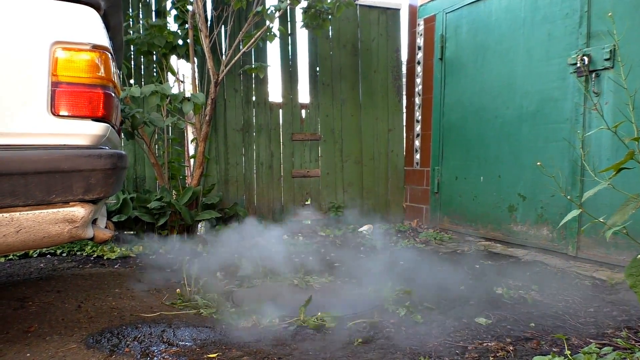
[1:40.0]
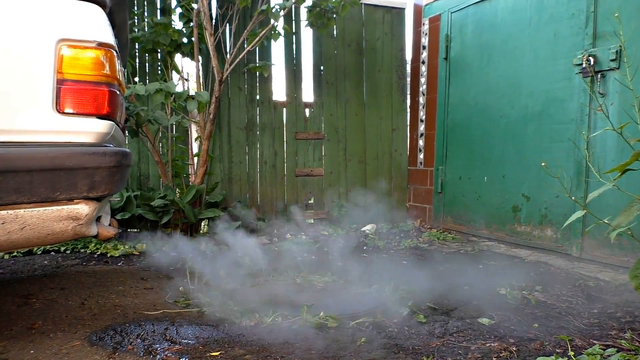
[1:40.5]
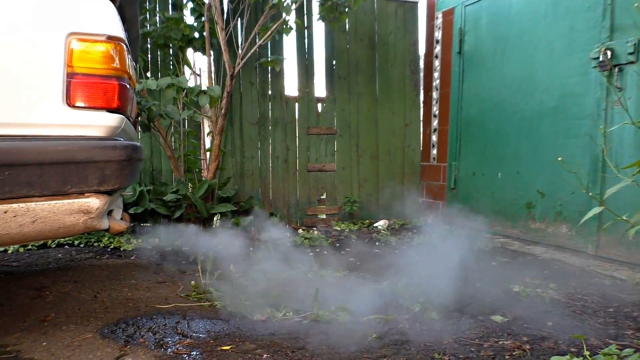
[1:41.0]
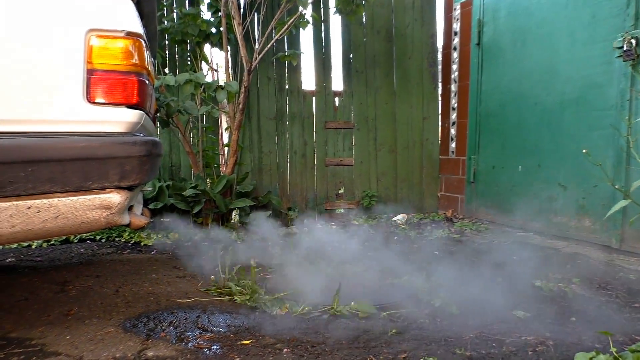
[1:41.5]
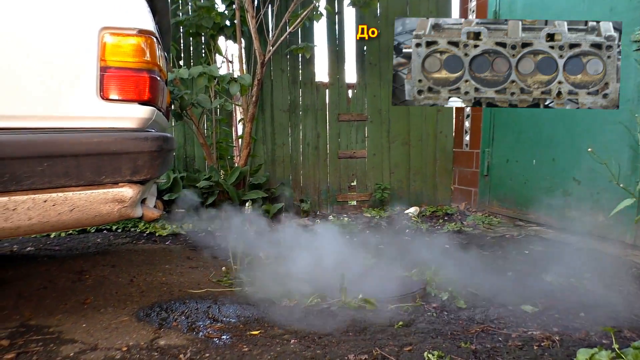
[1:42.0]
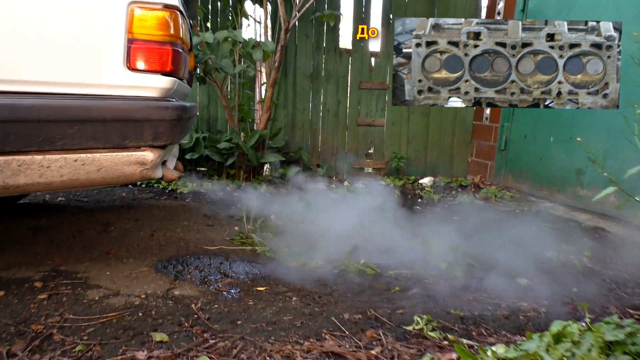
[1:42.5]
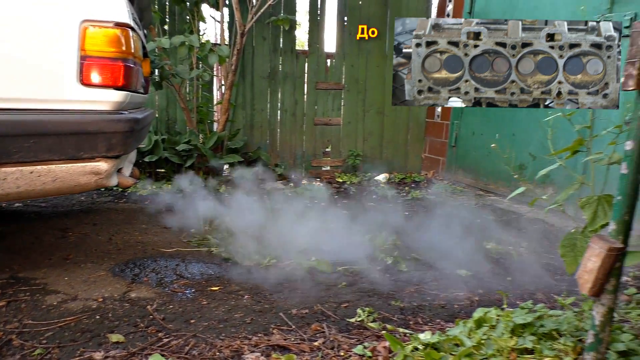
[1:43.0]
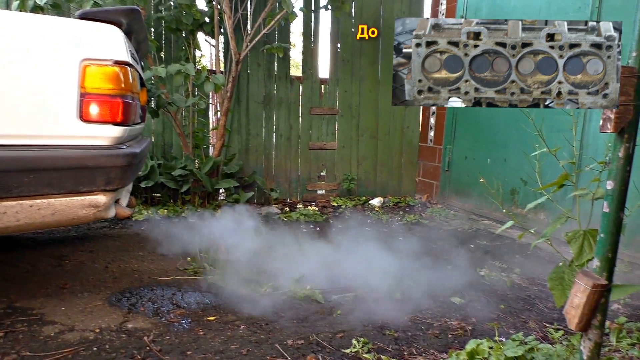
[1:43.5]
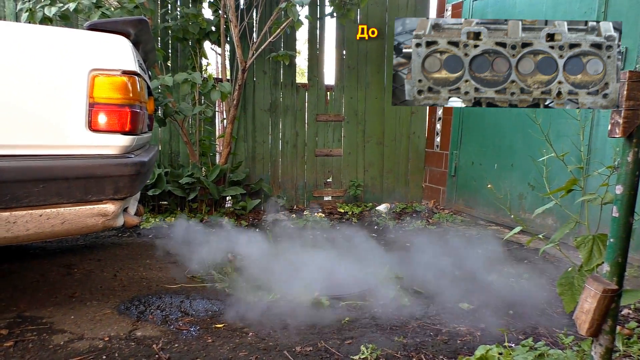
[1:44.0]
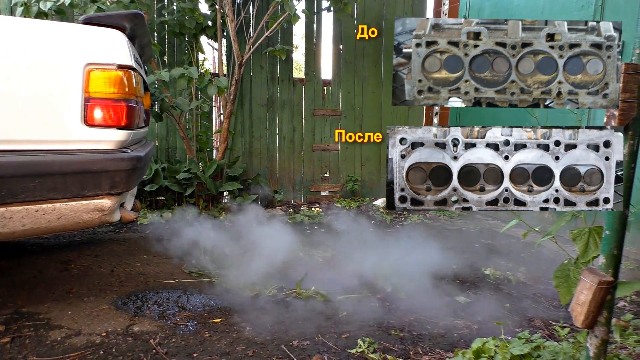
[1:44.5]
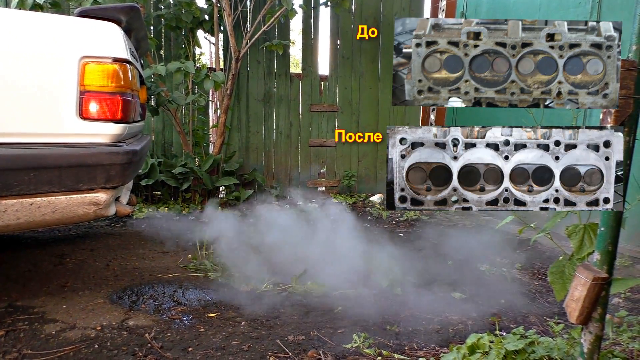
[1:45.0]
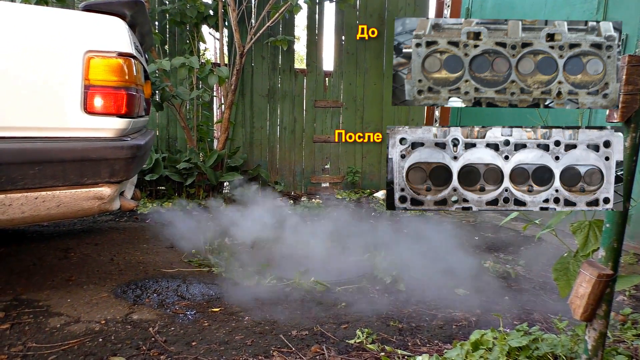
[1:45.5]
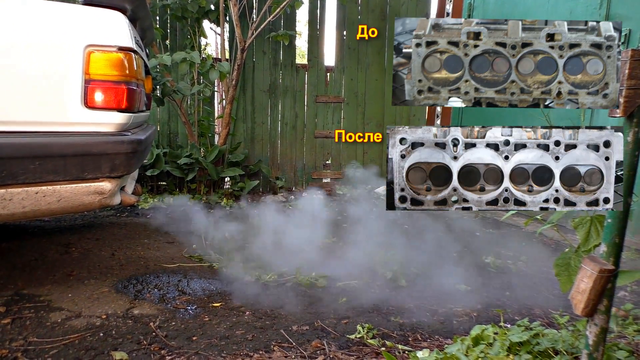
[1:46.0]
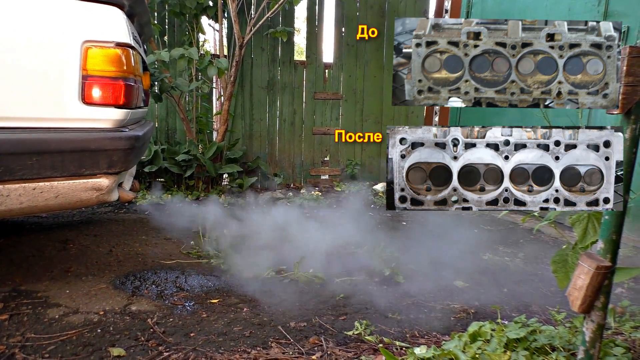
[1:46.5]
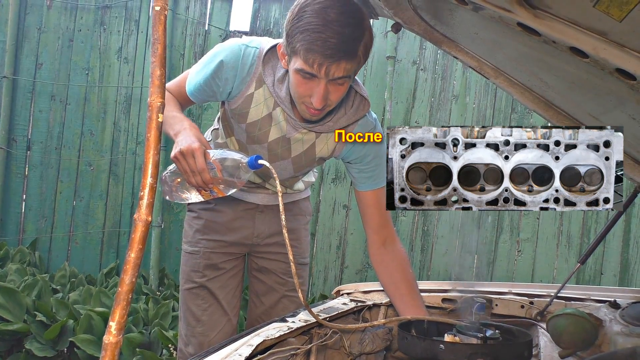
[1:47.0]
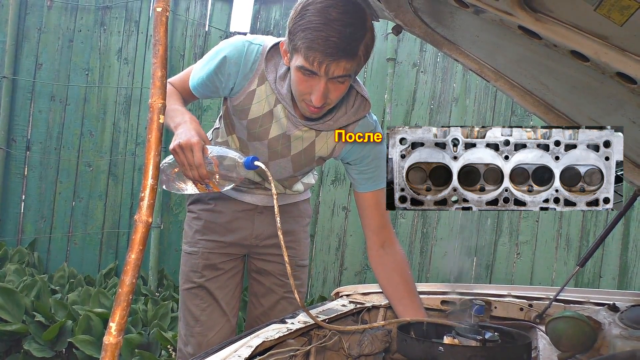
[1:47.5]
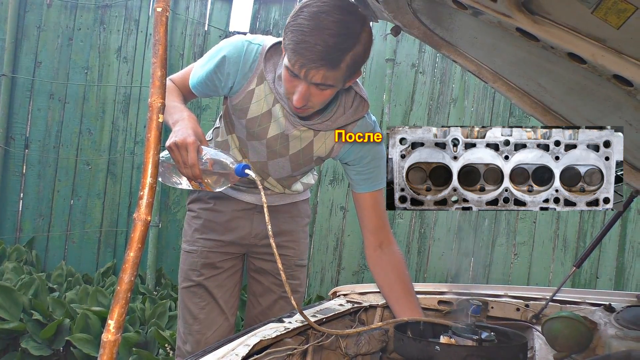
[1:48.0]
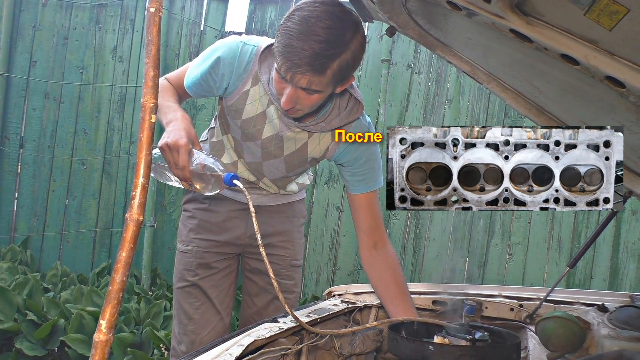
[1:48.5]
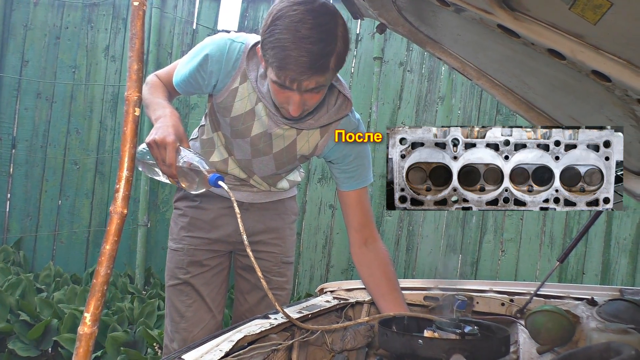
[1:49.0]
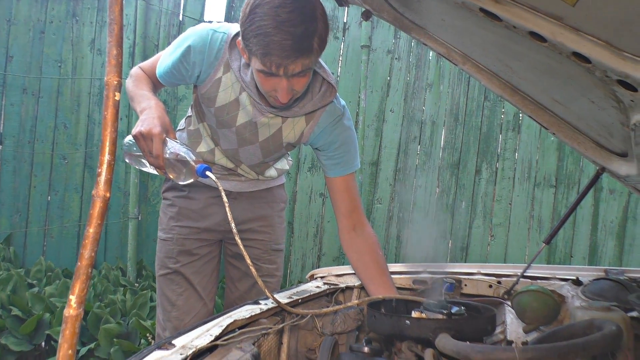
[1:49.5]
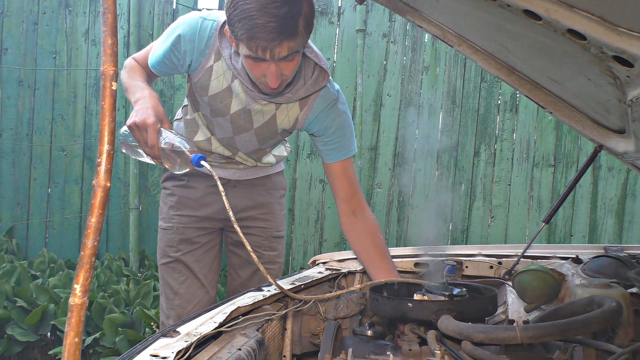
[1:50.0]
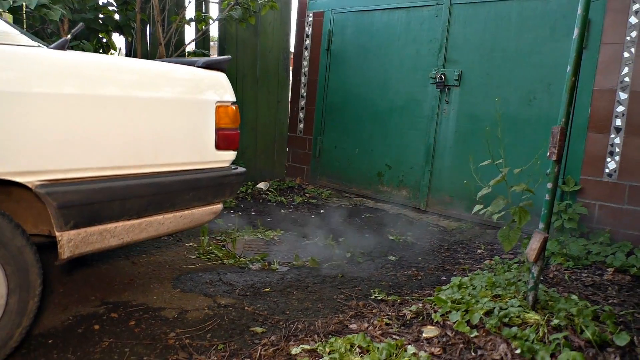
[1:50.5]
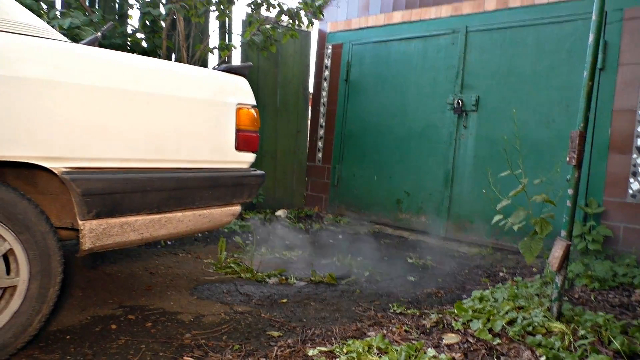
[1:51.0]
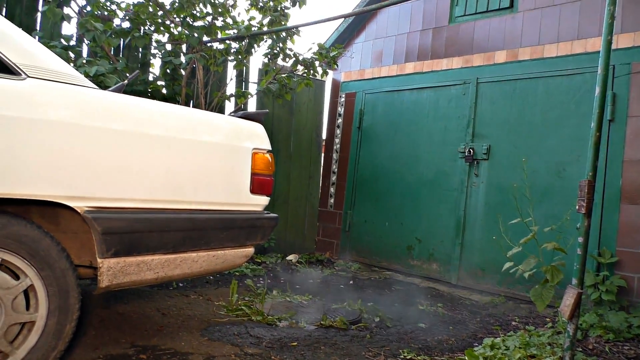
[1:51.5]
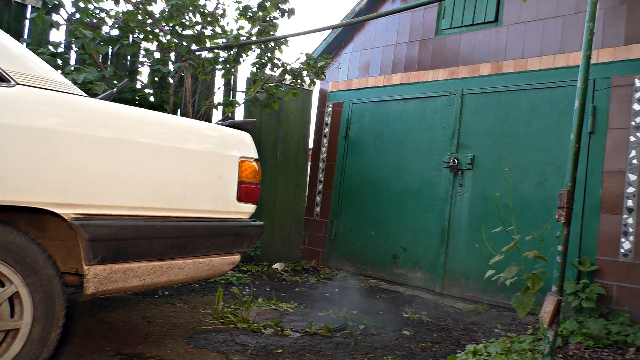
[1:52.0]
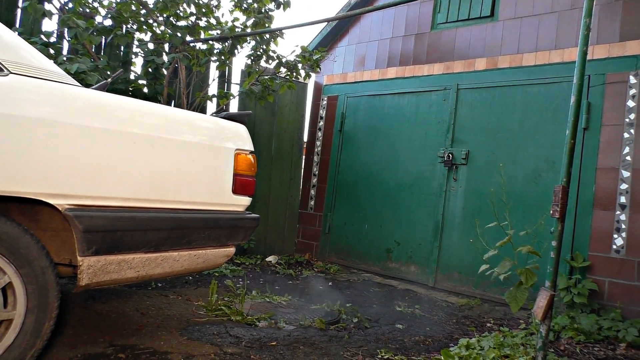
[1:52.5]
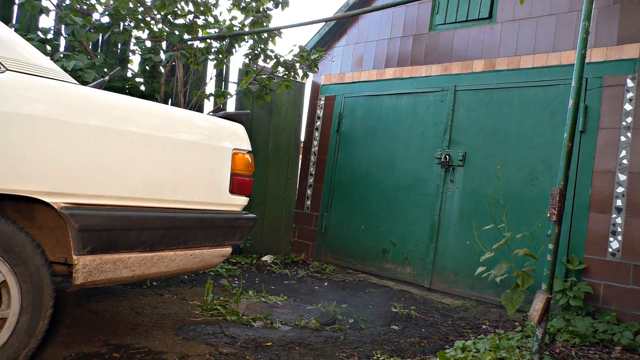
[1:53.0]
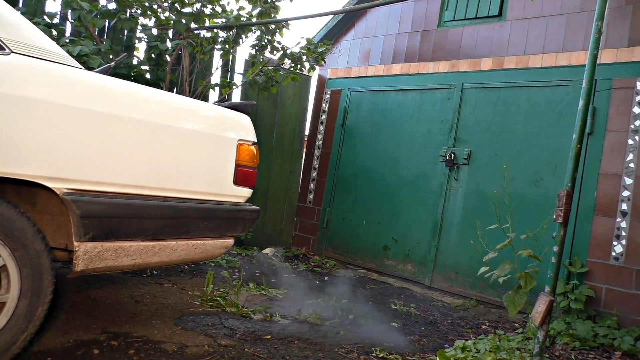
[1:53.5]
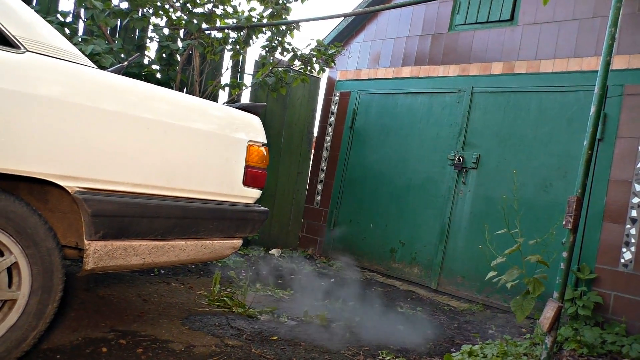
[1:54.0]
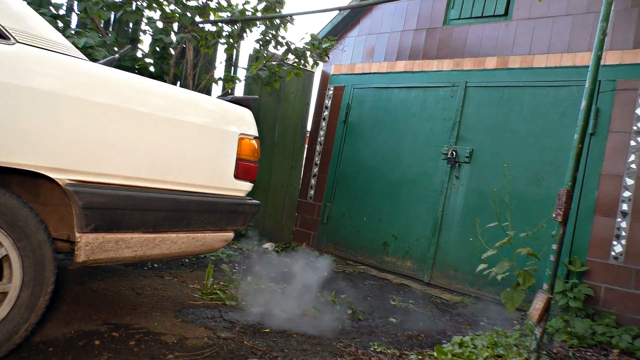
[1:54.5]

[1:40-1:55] A close-up shows a tailpipe with white smoke coming out of it, and the car is parked in front of a green fence. Closed captions at the bottom go by very quickly. They read "once the mixture gets into the engine, there will be some vapor," "there may be drops in the engine work during the decarbonizing," and "once you decarbonize the engine, such problems as overusing of engine oil will be gone. Drops of engine rotation overusing of petrol and low power."